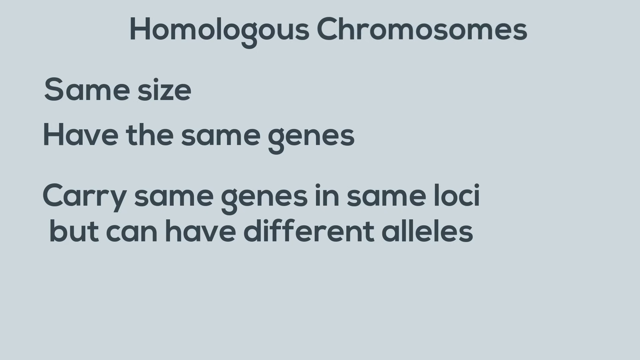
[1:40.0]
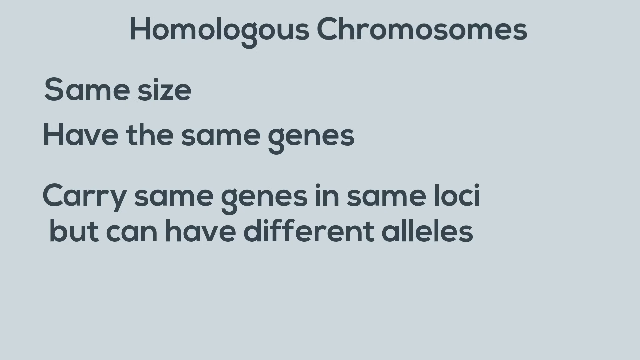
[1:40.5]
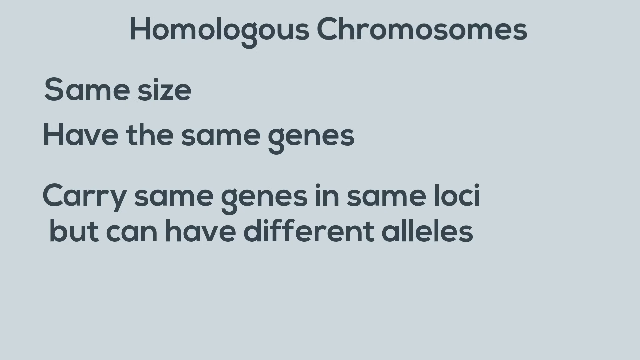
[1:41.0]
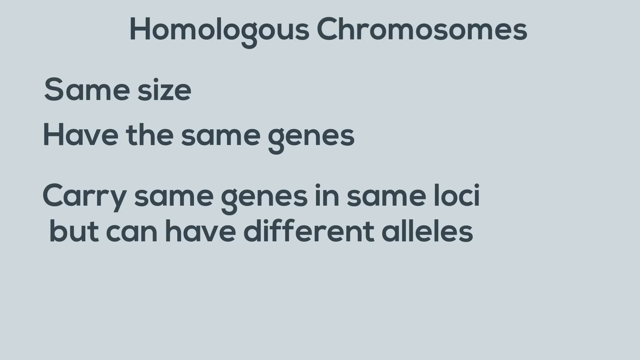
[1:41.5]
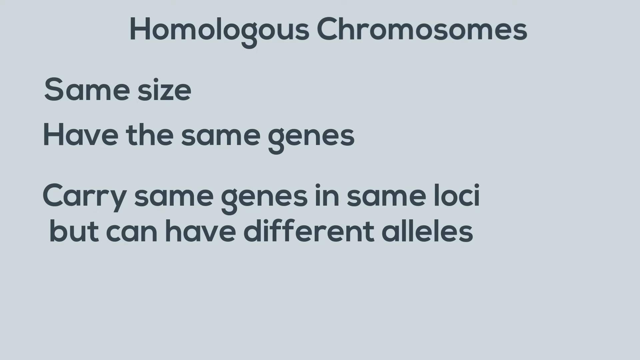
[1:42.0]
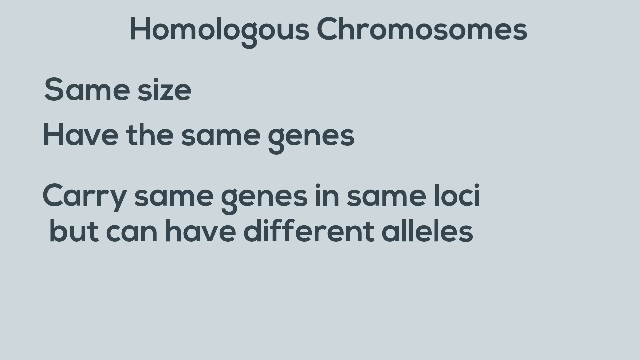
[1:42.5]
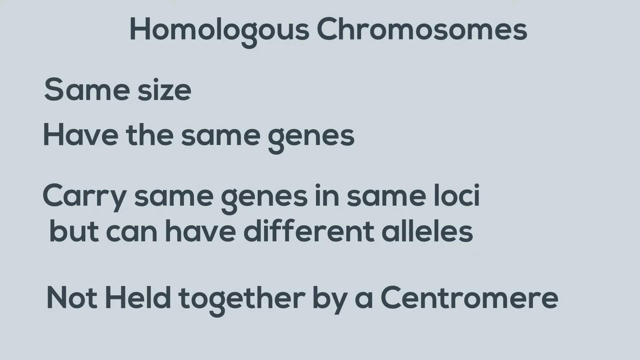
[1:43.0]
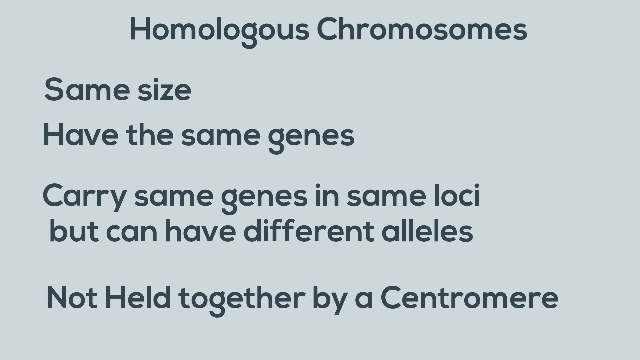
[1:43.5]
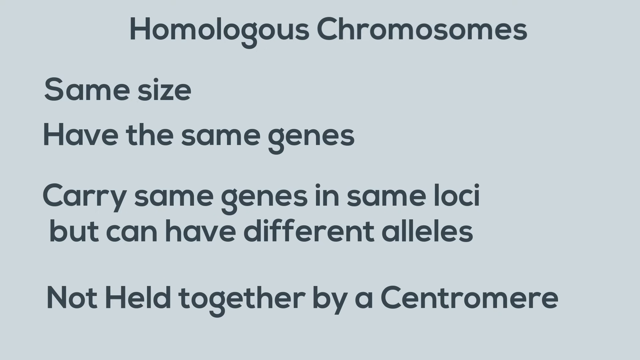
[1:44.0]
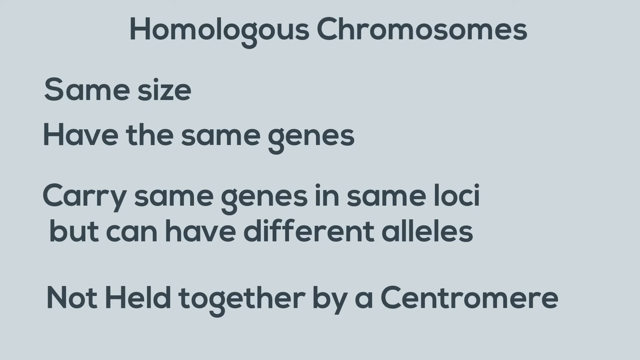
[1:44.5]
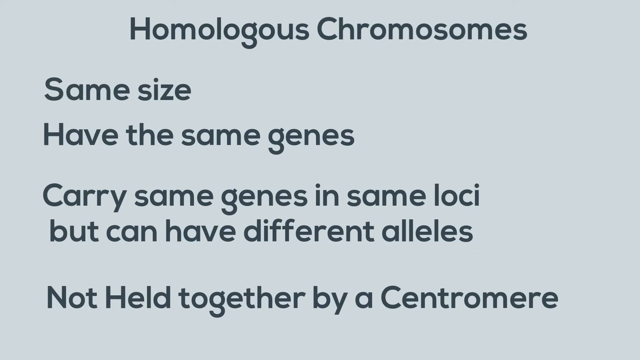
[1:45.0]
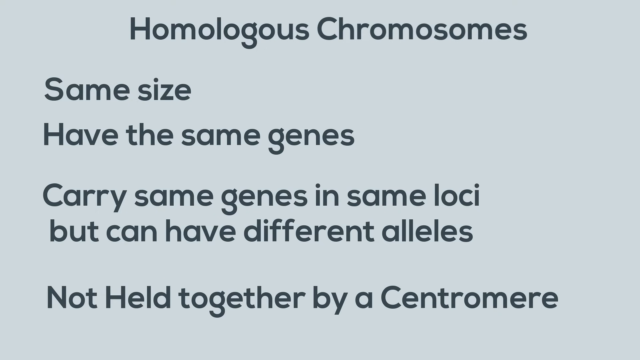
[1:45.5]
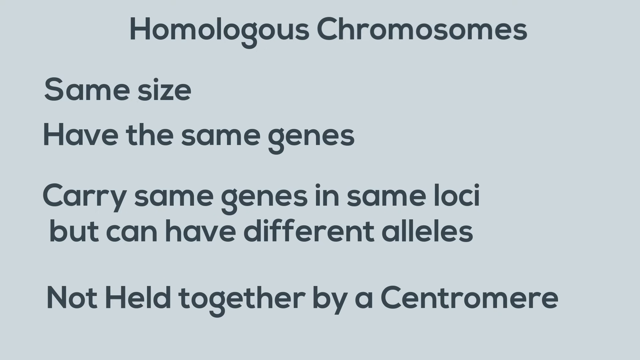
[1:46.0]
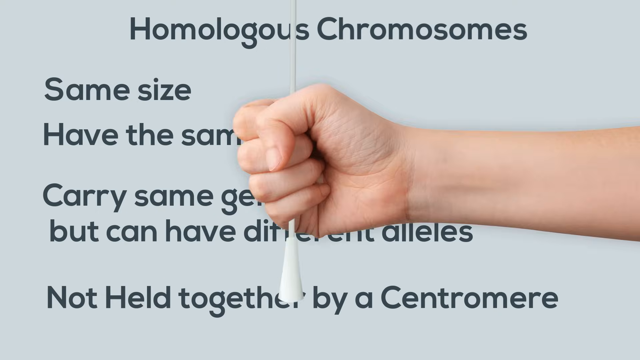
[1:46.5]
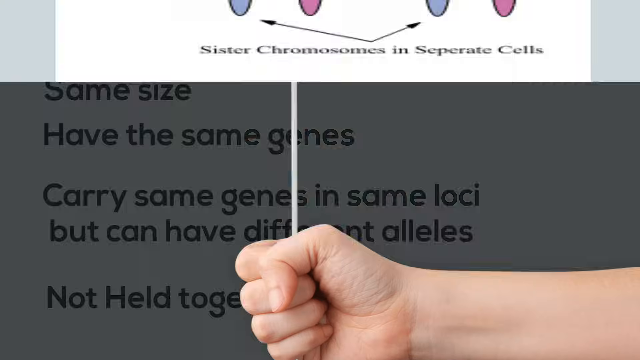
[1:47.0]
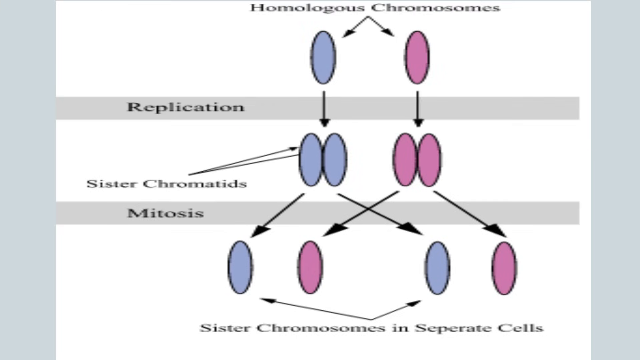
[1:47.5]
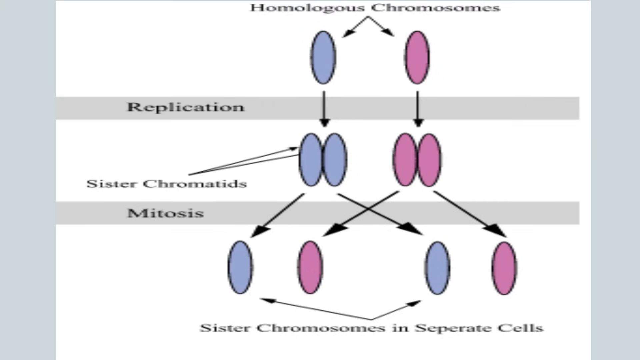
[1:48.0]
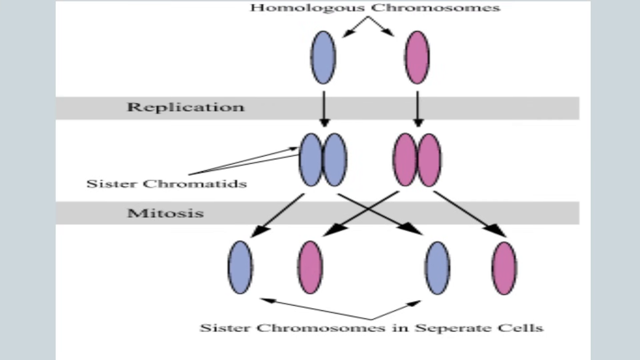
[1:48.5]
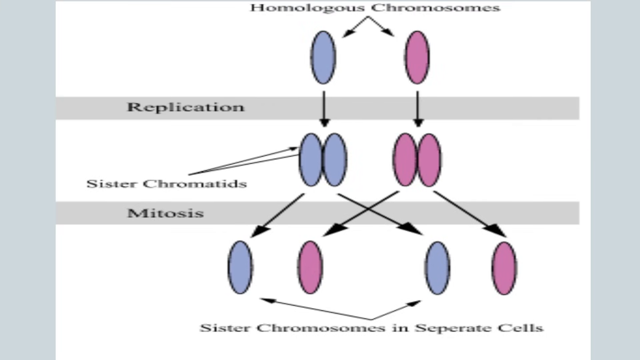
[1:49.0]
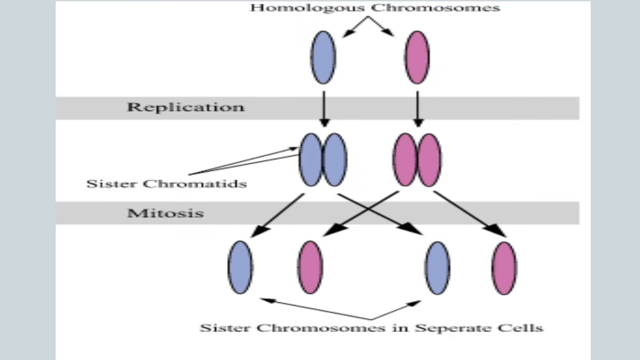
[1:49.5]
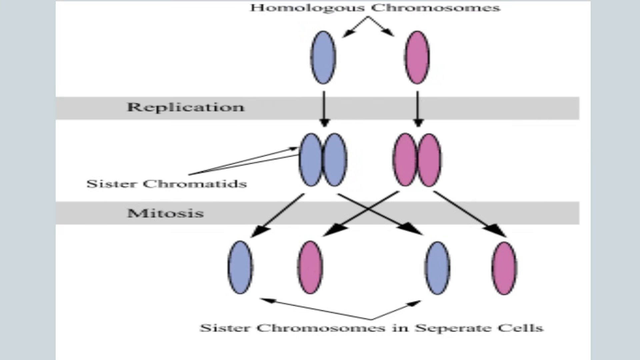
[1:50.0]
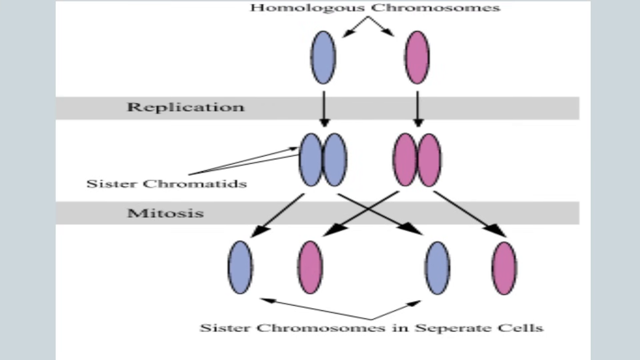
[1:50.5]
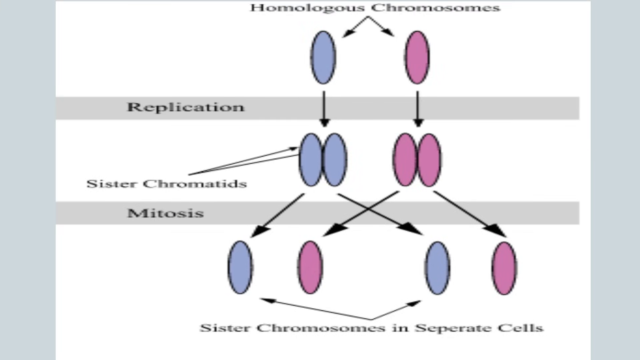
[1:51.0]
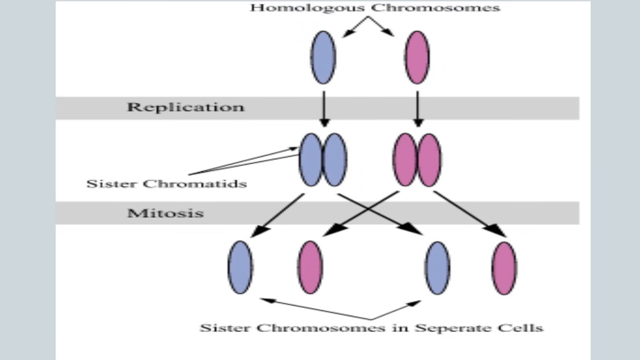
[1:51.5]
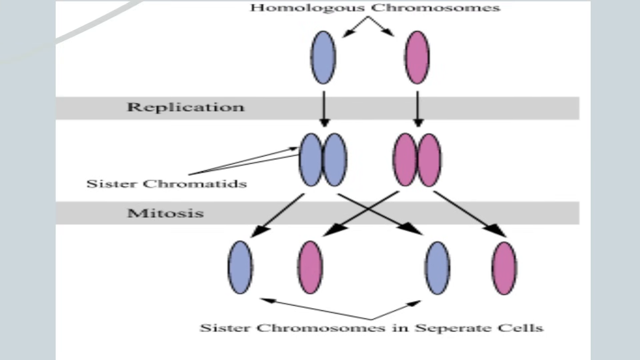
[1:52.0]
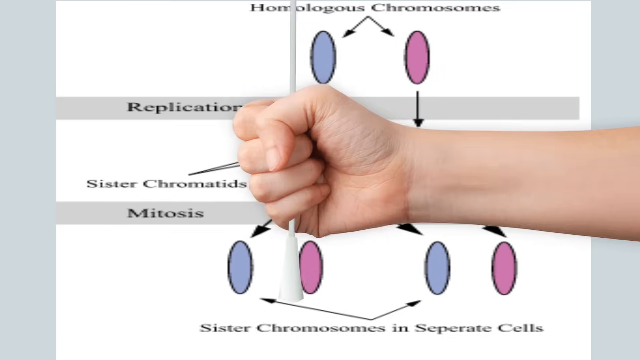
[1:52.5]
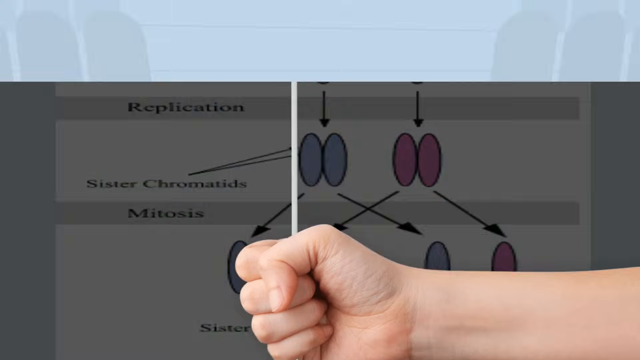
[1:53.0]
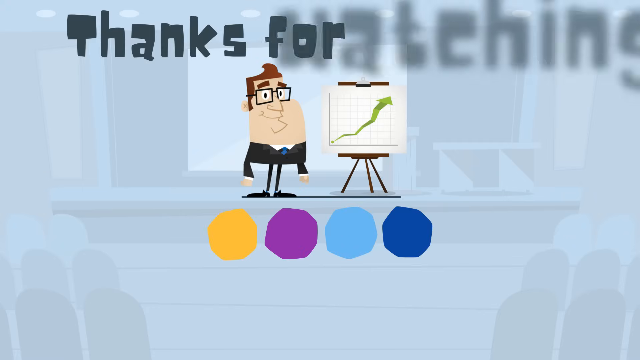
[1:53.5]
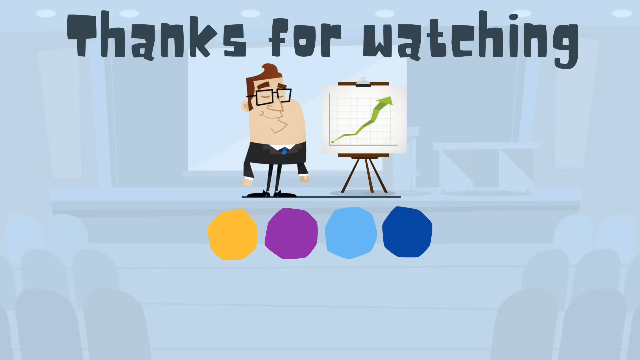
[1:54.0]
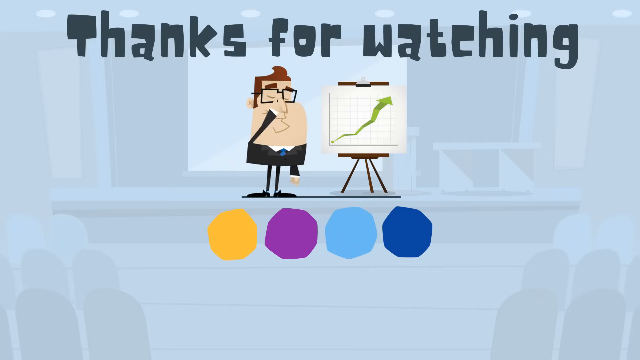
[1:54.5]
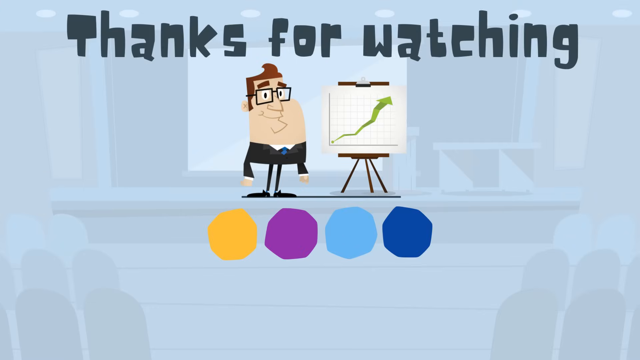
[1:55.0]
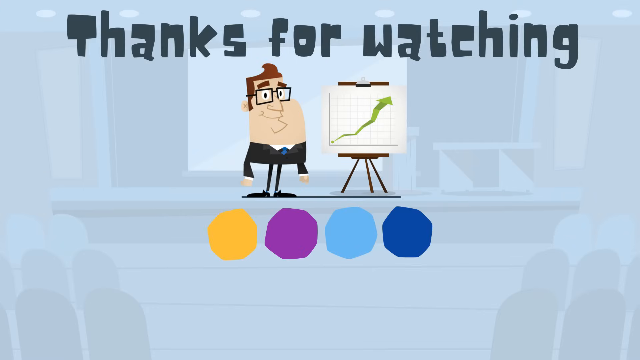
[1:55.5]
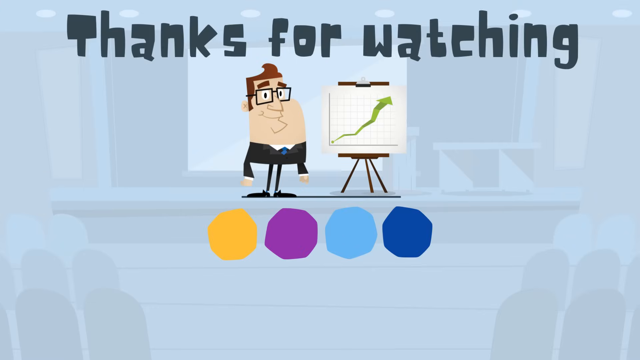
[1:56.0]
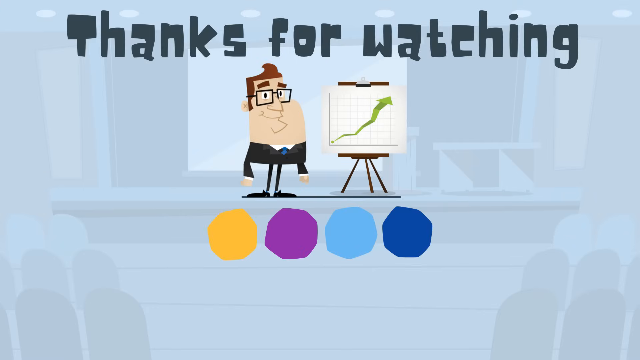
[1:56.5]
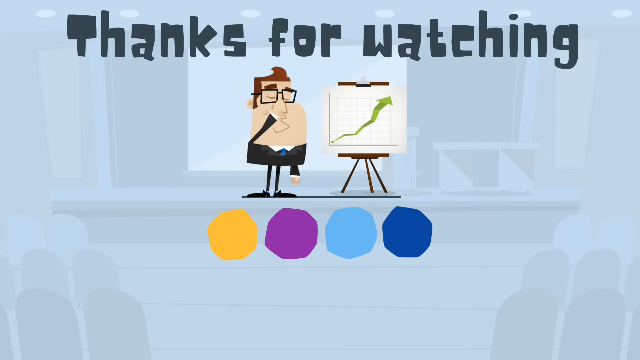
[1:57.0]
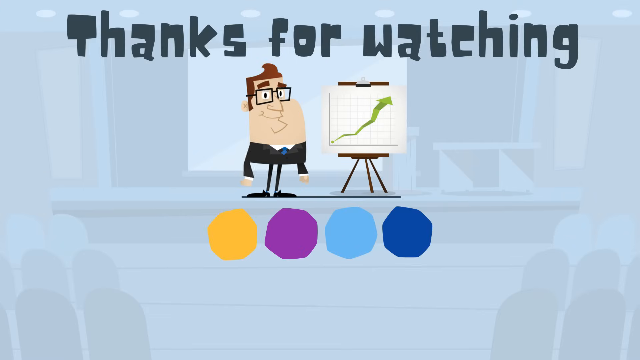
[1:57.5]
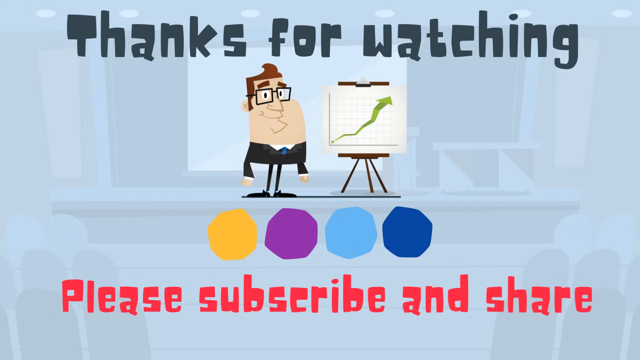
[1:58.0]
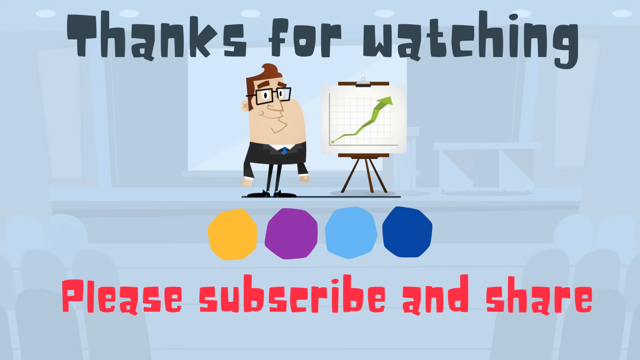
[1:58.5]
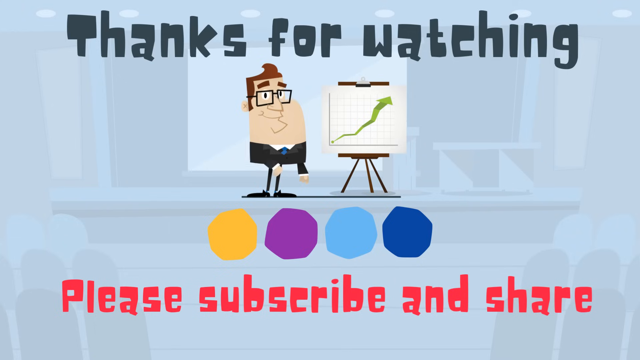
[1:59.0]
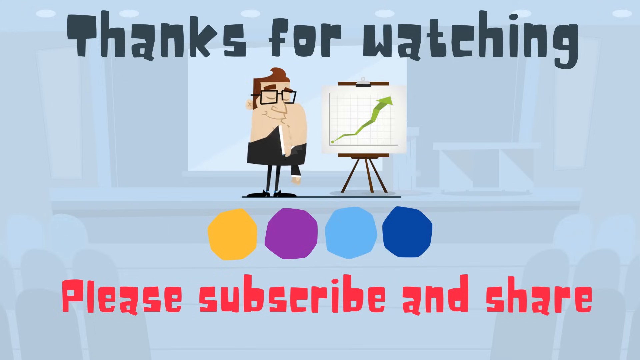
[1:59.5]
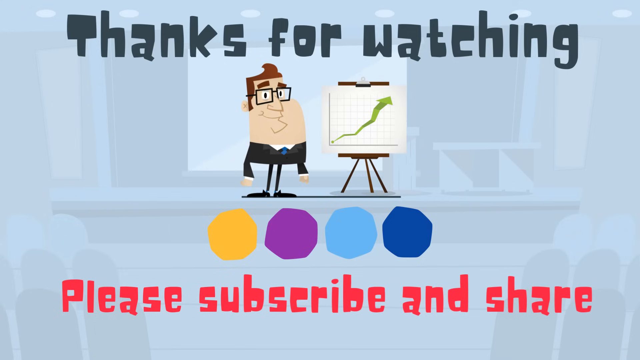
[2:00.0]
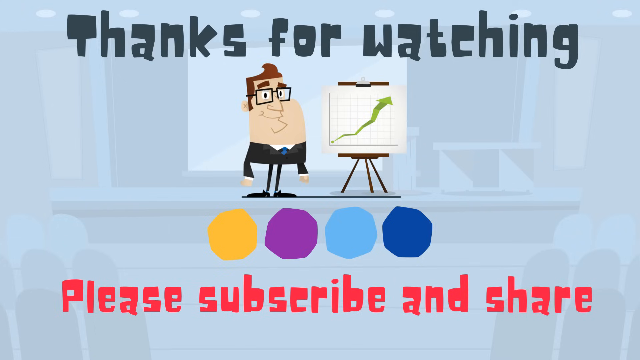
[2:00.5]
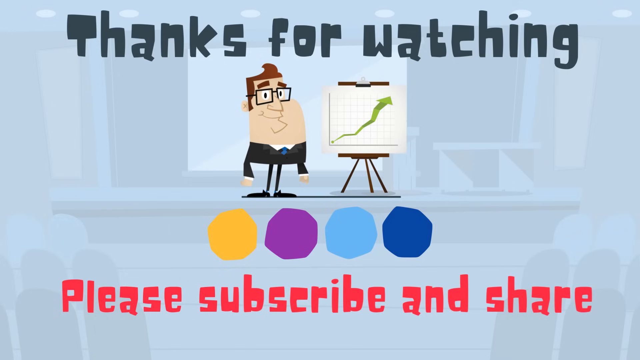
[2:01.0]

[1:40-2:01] The text says homologous chromosomes "are the same size, have the same genes, carry same genes and same loci, but have different alleles", on a grayish-blue background with dark gray text. The video returns to the flow chart diagram with the homologous chromosome at the top, going through replication to sister chromatids, then mitosis, and eventually the sister chromatids in separate cells. It then goes to a "thanks for watching" credit showing a cartoonish character on a chart, in yellow, purple, light blue and dark blue. The chart with the cartoon figure shows a line going upward.